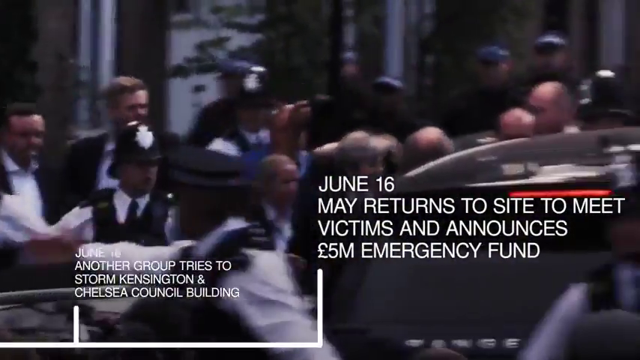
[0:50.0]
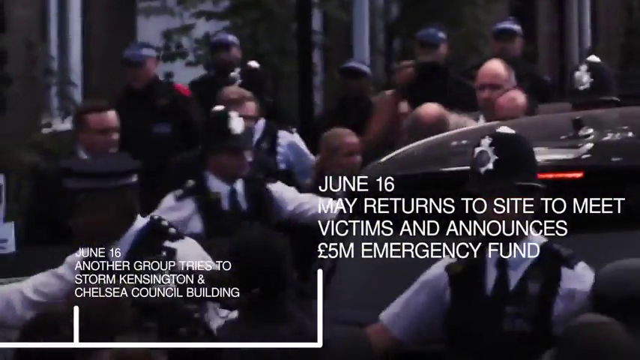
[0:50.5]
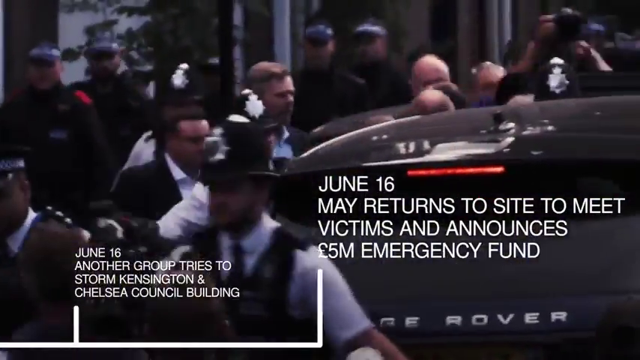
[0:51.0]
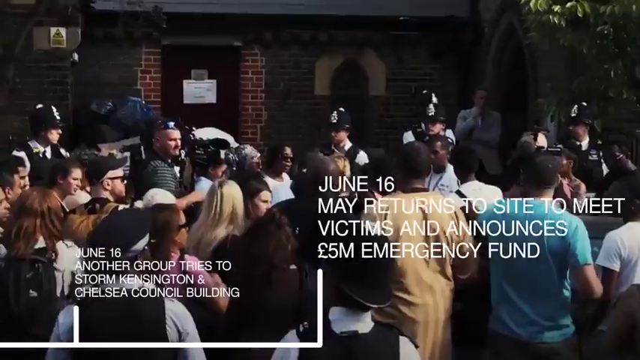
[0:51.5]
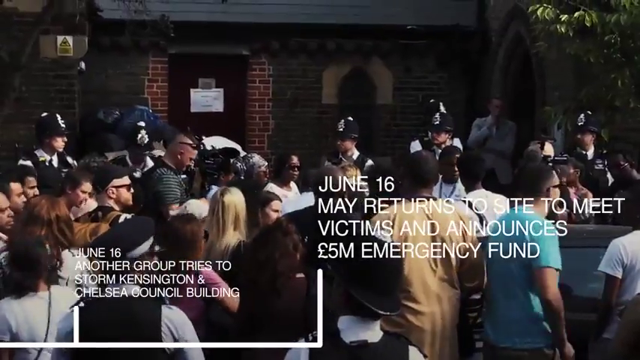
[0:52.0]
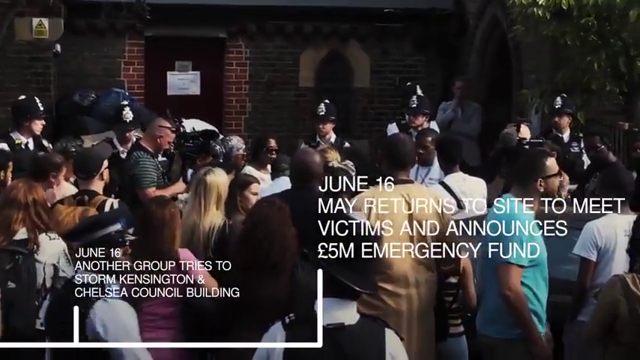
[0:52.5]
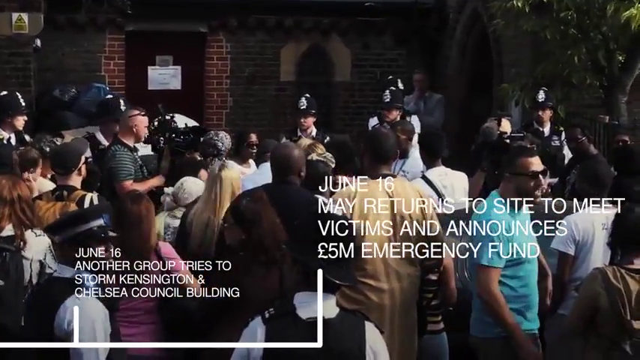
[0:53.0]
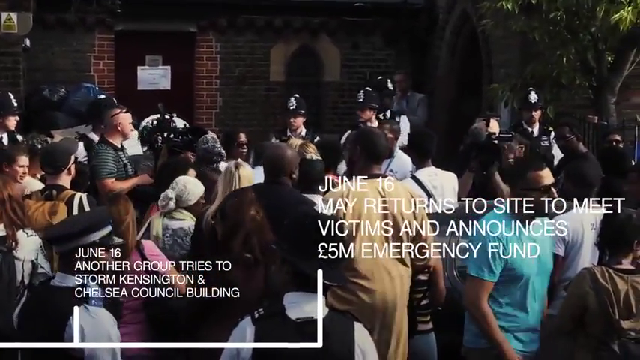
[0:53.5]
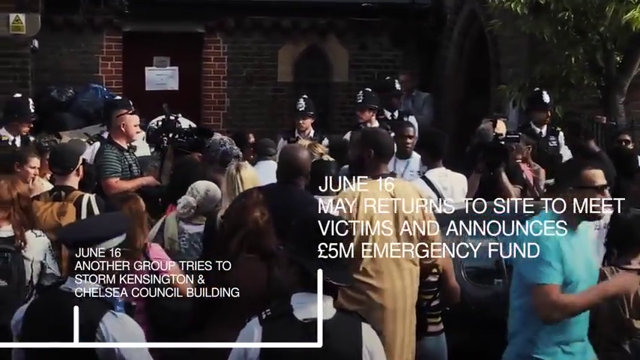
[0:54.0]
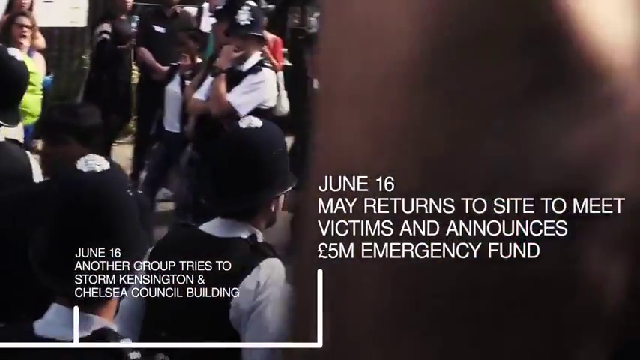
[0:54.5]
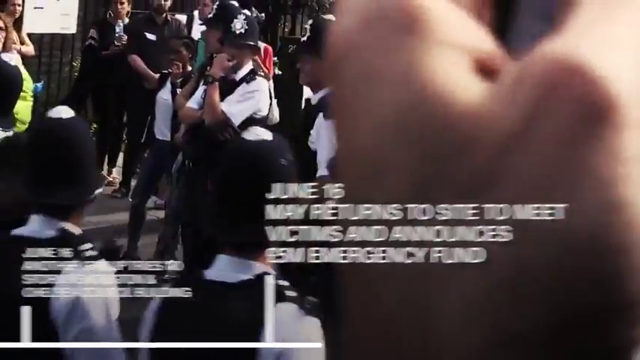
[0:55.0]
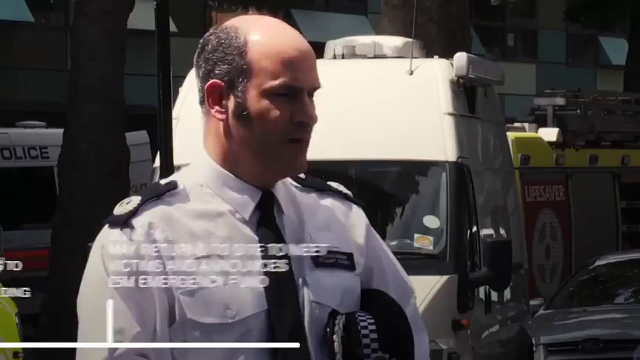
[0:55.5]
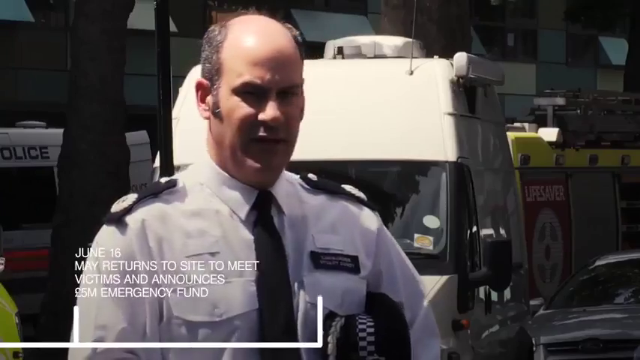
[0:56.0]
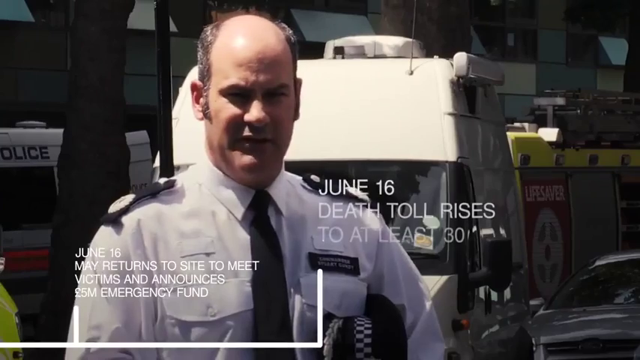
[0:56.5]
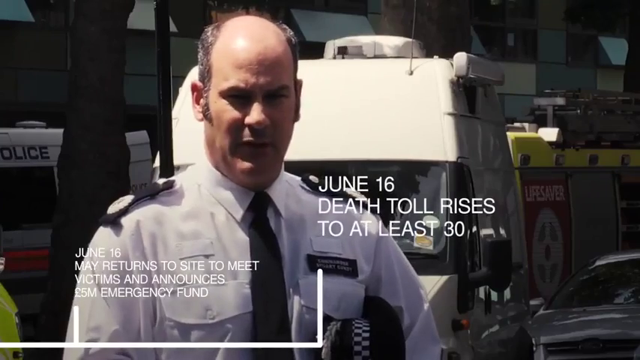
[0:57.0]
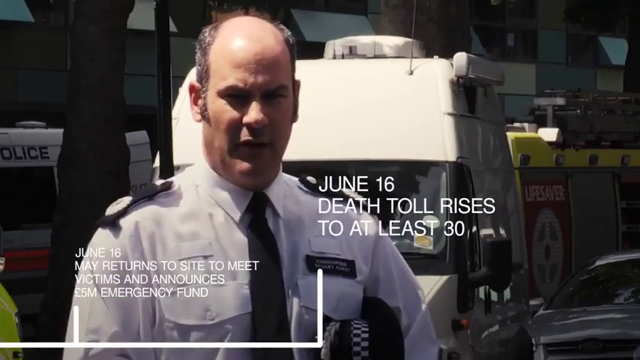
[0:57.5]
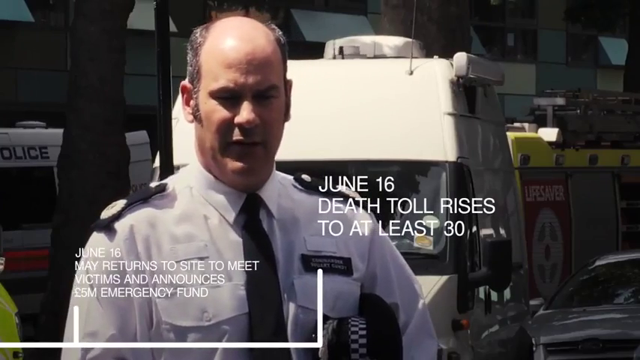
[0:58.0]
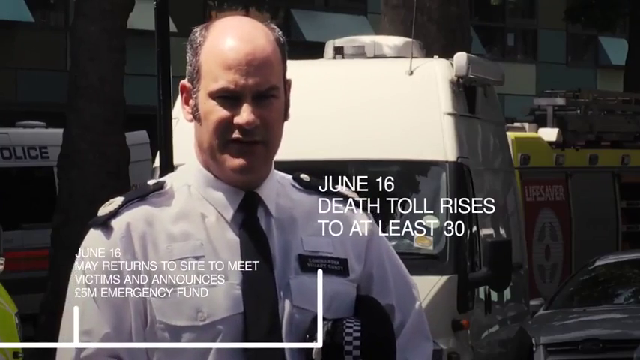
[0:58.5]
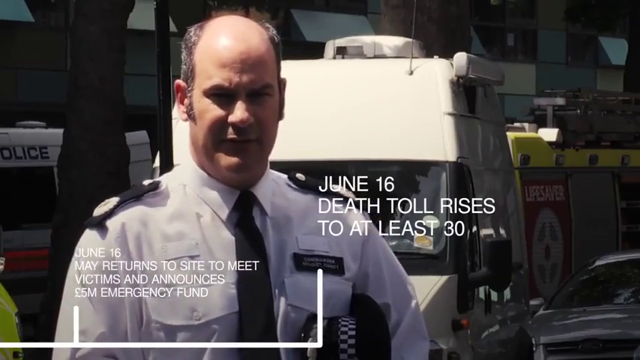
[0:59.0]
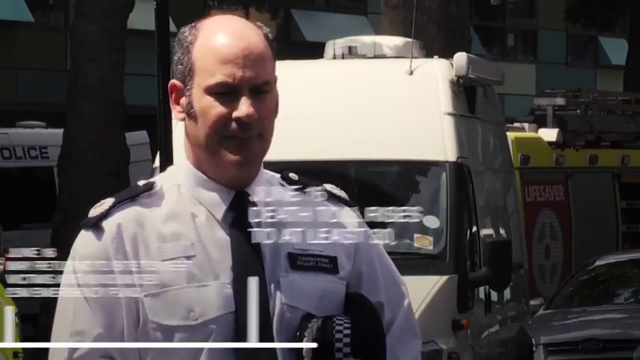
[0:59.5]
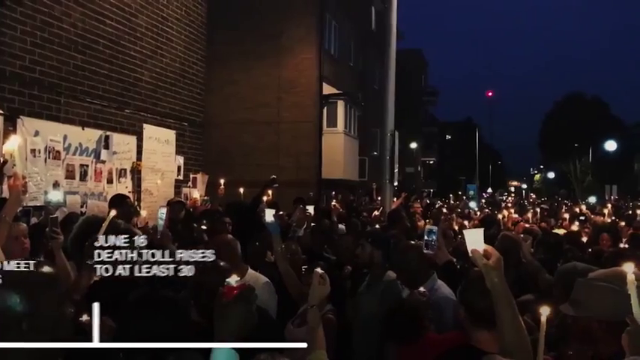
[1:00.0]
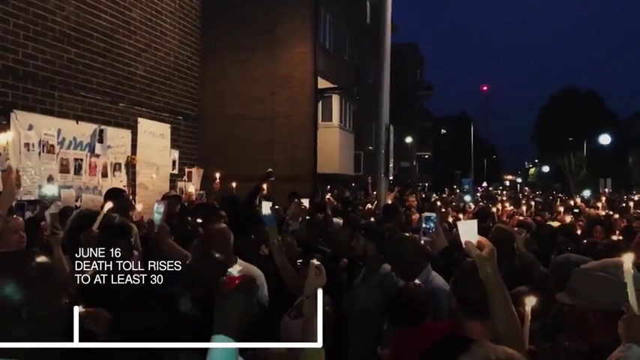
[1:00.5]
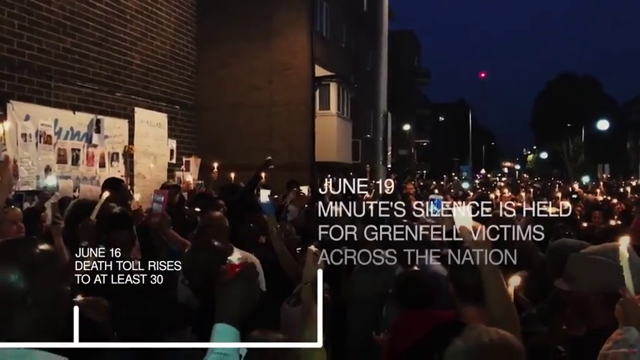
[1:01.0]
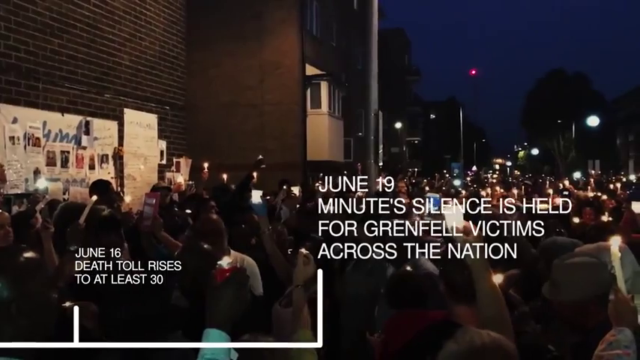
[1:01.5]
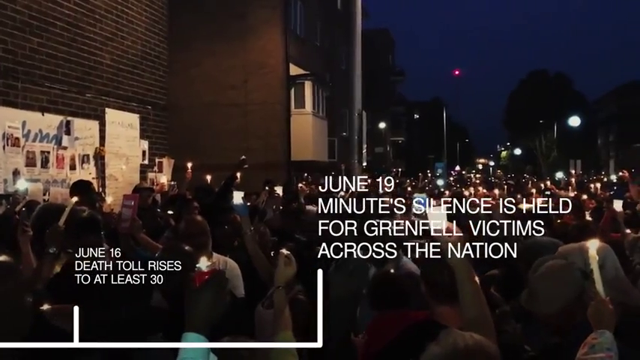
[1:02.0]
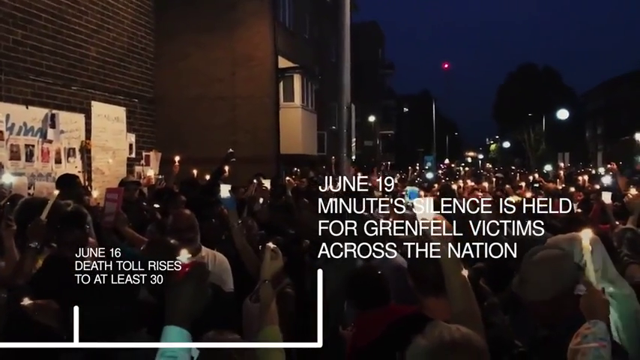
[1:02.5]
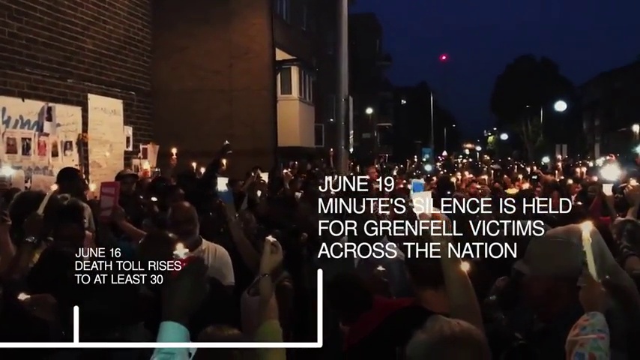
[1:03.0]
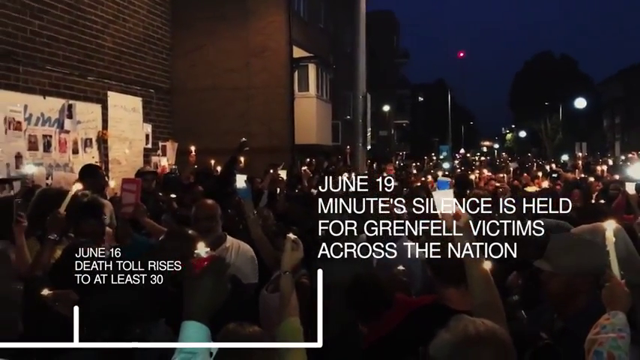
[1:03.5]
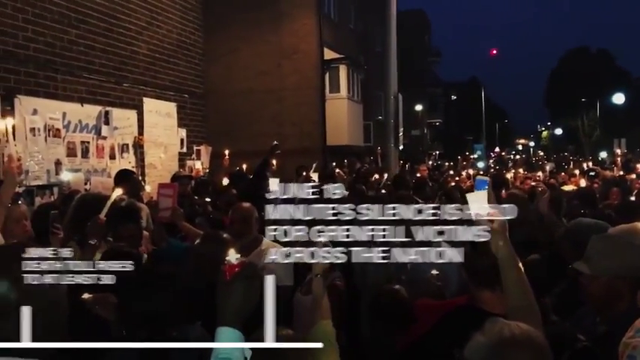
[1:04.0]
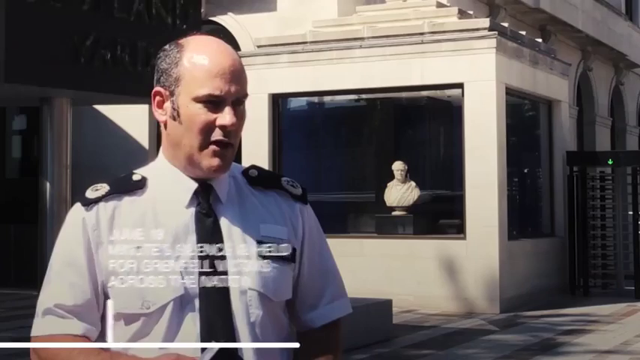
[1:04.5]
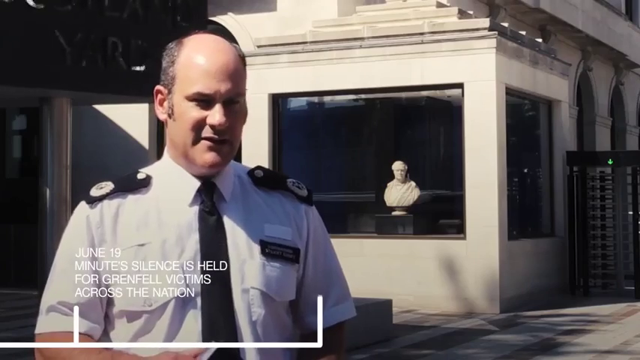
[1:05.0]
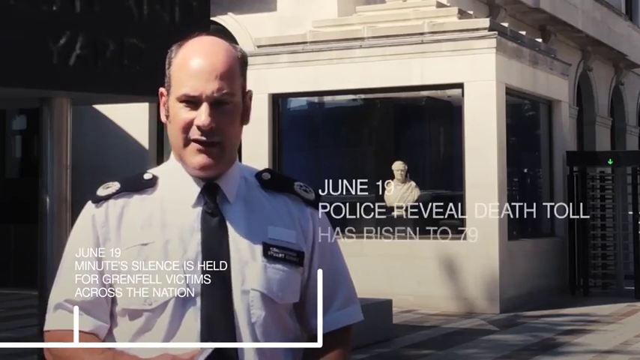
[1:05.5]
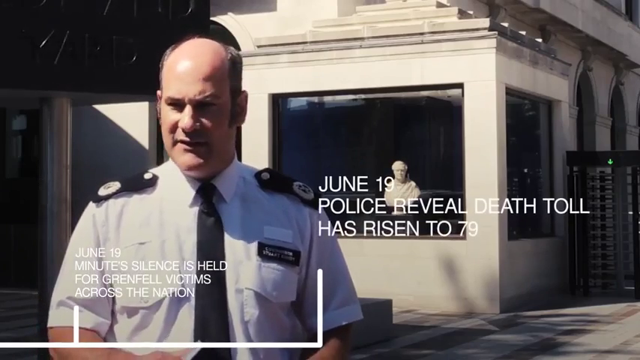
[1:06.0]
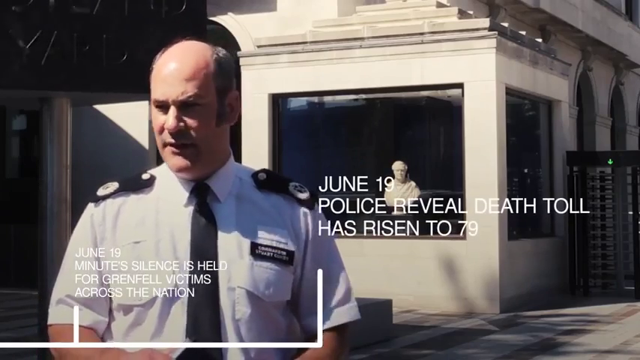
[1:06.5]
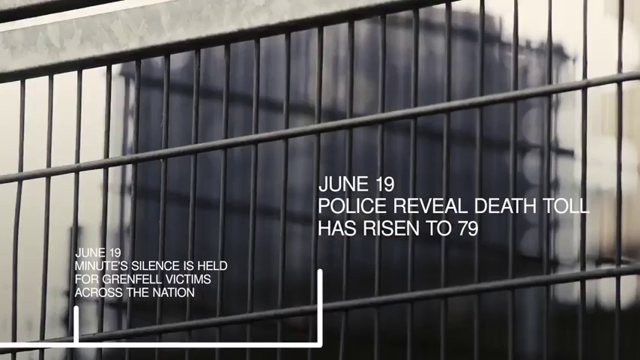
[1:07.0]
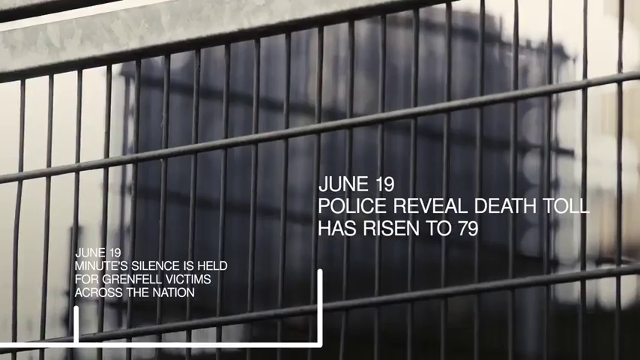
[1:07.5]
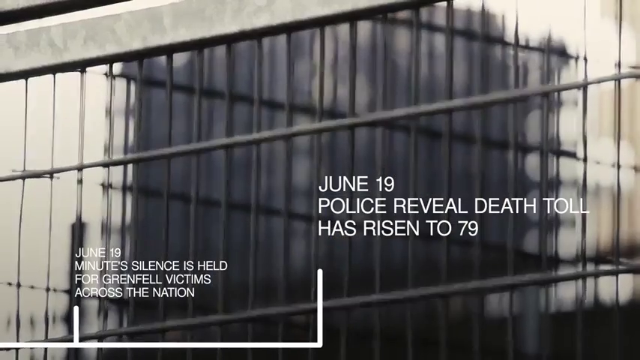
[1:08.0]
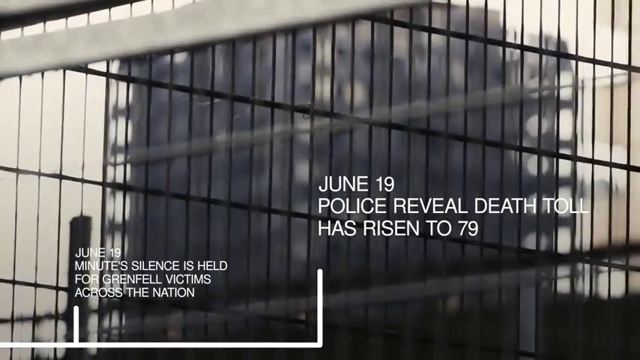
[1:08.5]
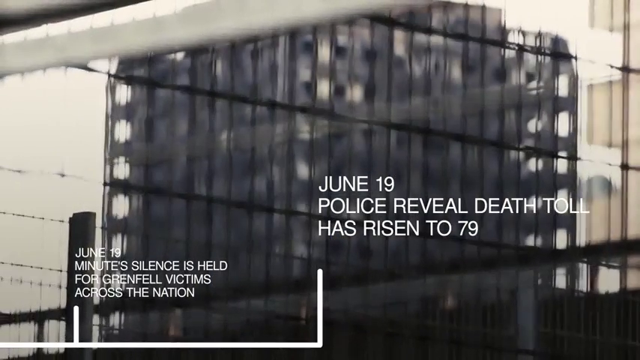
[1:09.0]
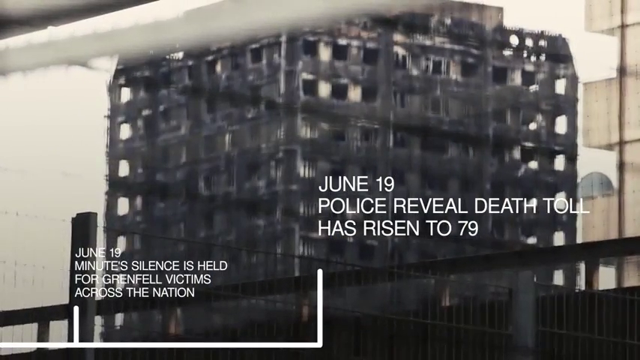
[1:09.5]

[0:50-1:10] A crowd moves: police officers, citizens, and some people with cameras, then more people marching. The text at the center moves down to the left and shrinks, and the timeline continues at the center with "June 16th, death toll rises to at least 30." The person in the background is speaking and looking forward, then looks to the left. The center text shrinks and moves down to the left, making room for more text: "June 19th" and "silence is held for Grenfell victims across the nation." A crowd at night holds up their phones, with lights shown. More text appears at the center: "June 19th, police reveal death toll has risen to 79." The person in the back is speaking, with bars behind. The bars go out of focus and a building in the back comes into focus.